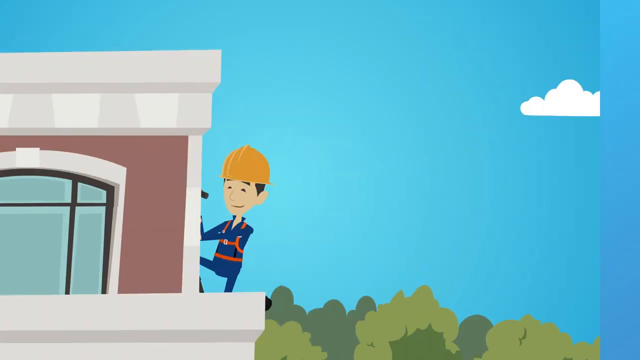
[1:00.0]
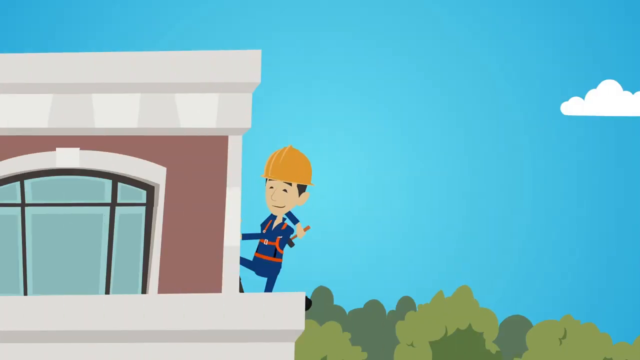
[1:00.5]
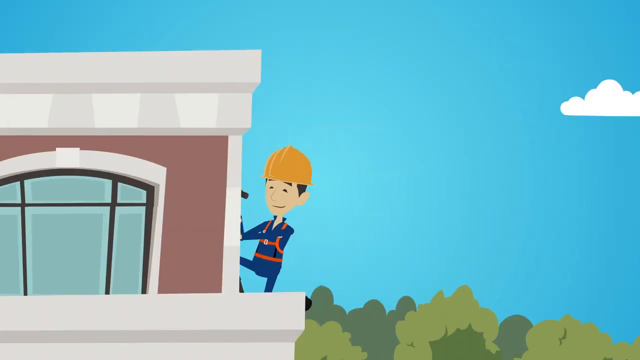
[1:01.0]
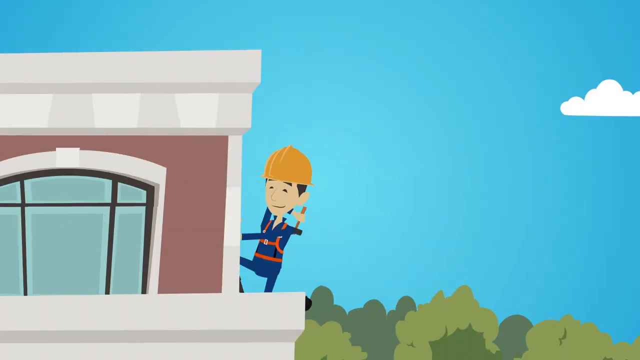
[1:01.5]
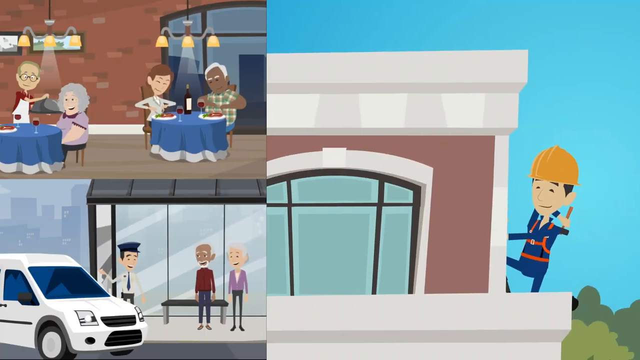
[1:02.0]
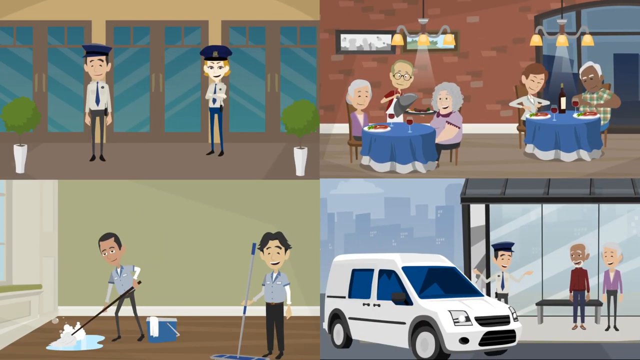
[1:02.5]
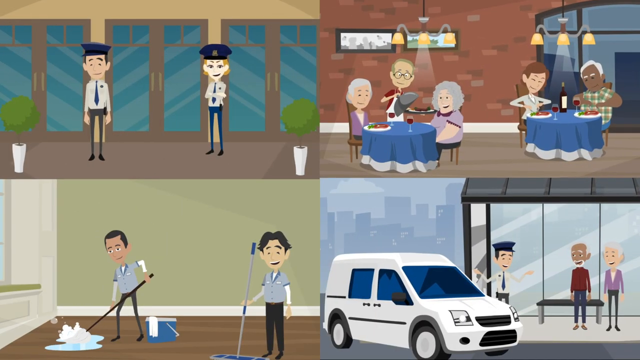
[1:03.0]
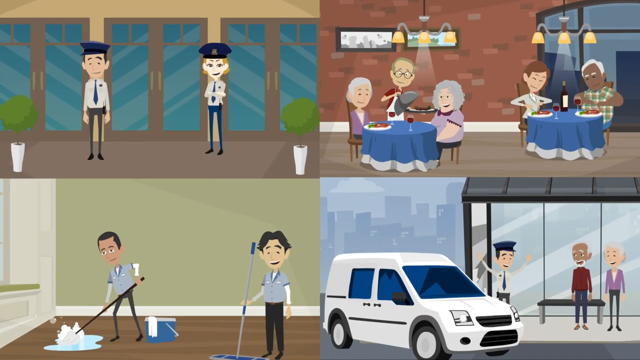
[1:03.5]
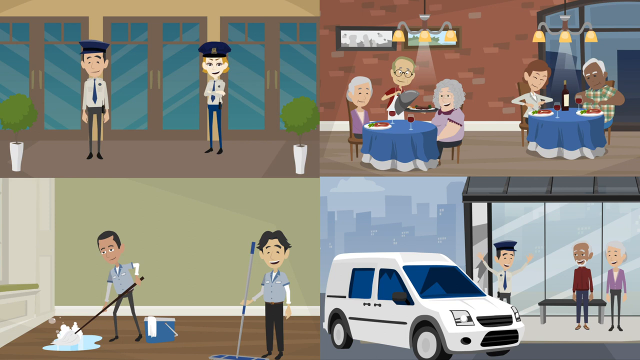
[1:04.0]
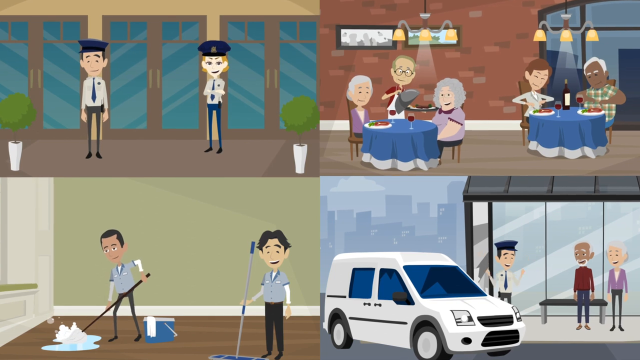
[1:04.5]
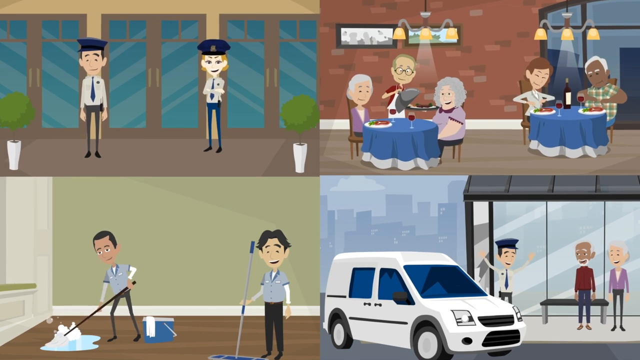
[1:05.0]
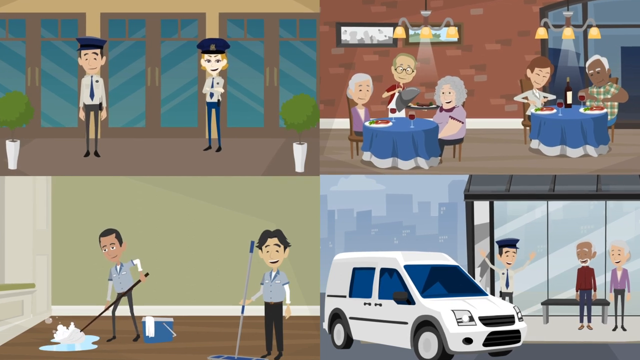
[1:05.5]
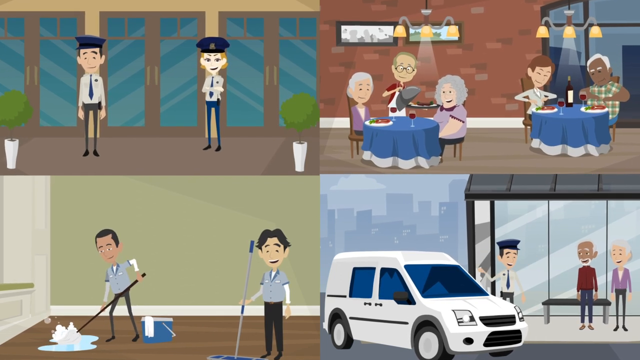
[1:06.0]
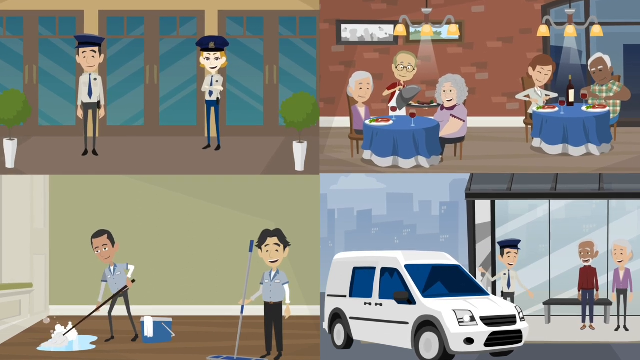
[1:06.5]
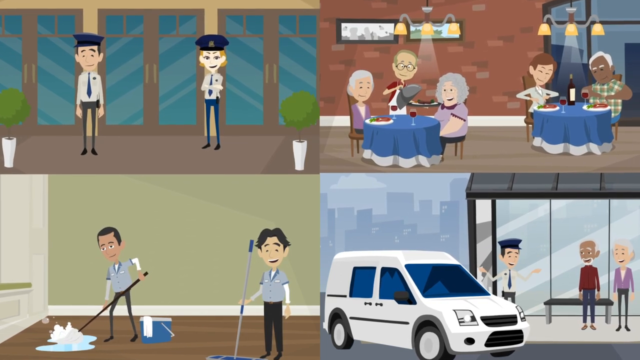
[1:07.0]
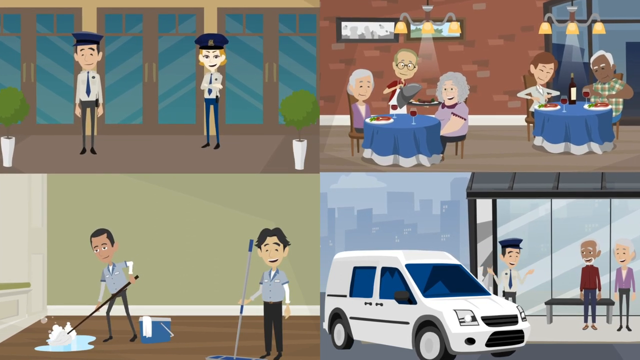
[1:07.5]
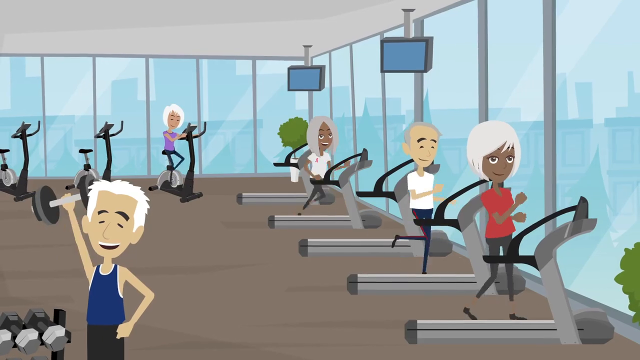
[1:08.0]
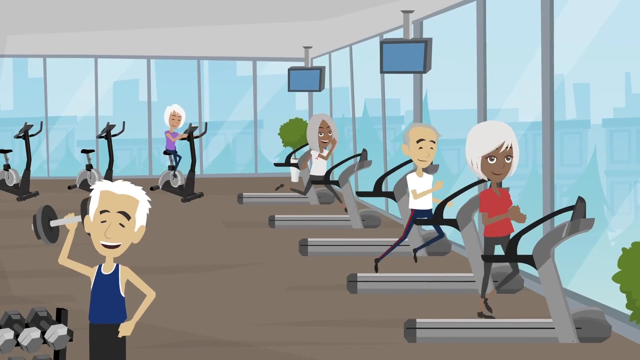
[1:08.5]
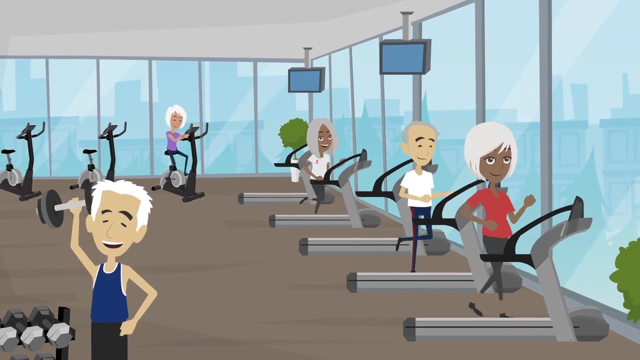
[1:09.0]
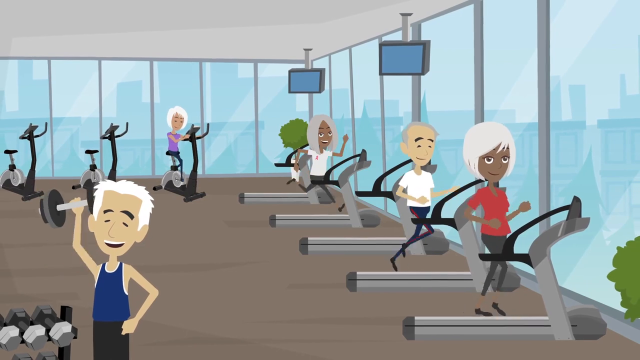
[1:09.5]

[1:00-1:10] A man works on the outside of a building, wearing some kind of red harness over blue overalls and a yellow hard hat, hammering the building's exterior wall. The next scene is split into four. In the top left, two security guards are outside the front of a building. In the top right, two elderly-looking couples are out for dinner at a restaurant, with a waiter presenting food to one of the customers. In the bottom left, two cleaners mop a wooden floor in a building. In the bottom right, a small white van has a security man outside it talking to an elderly couple, apparently perhaps at a bus stop.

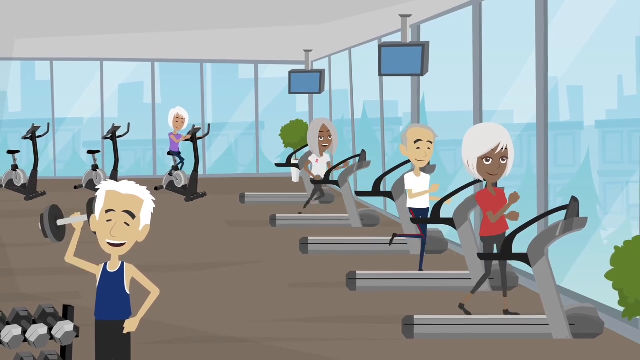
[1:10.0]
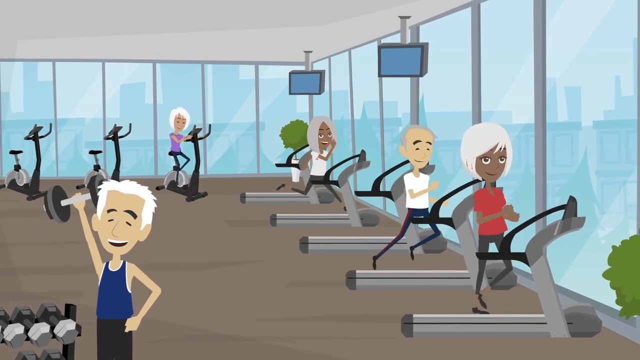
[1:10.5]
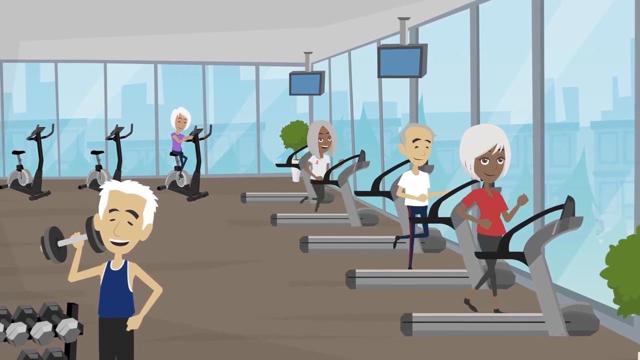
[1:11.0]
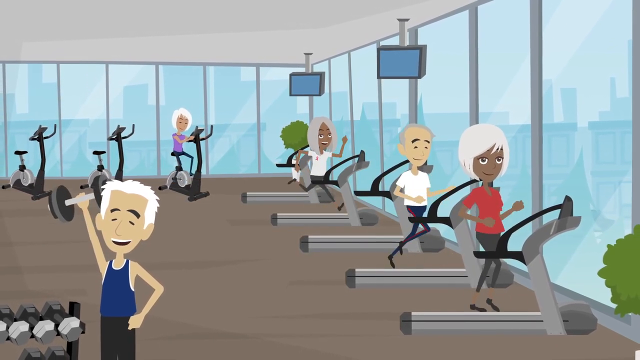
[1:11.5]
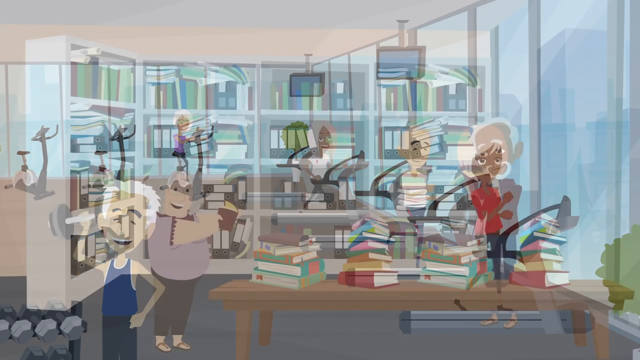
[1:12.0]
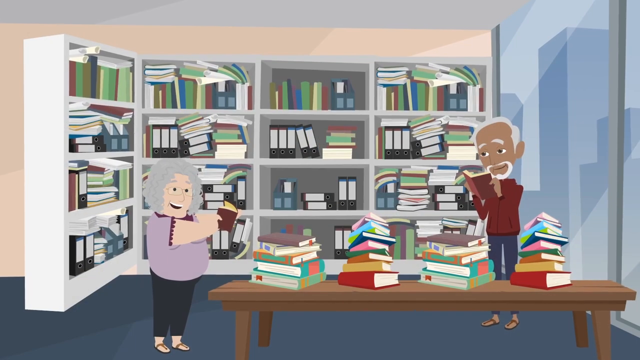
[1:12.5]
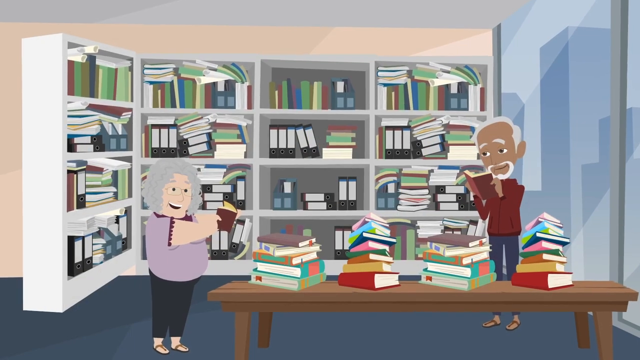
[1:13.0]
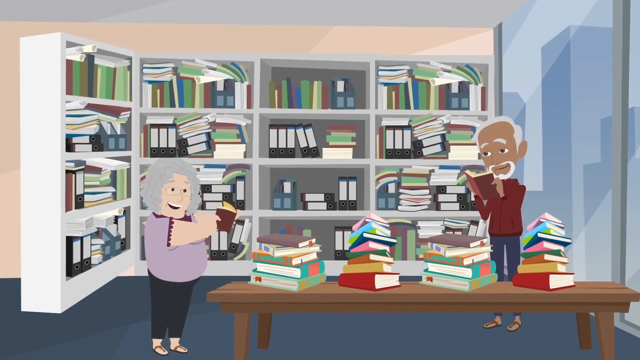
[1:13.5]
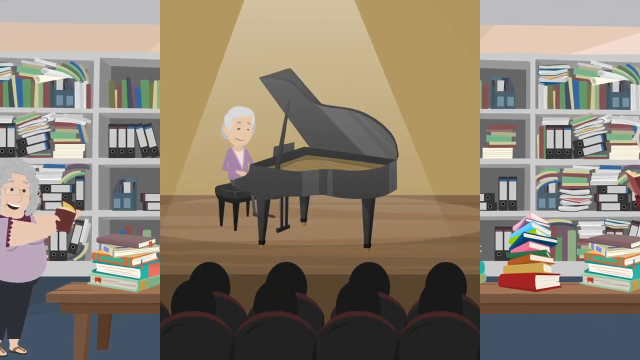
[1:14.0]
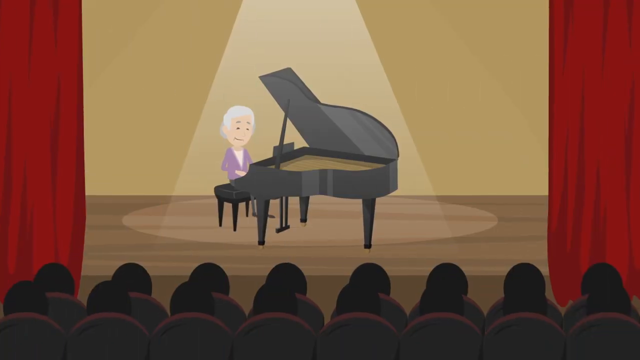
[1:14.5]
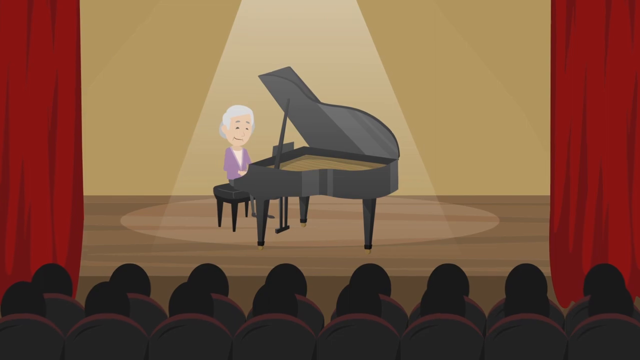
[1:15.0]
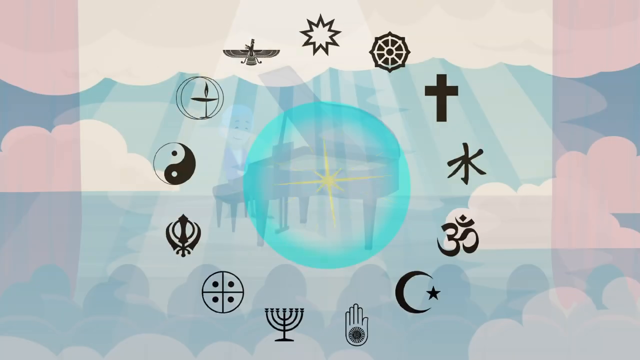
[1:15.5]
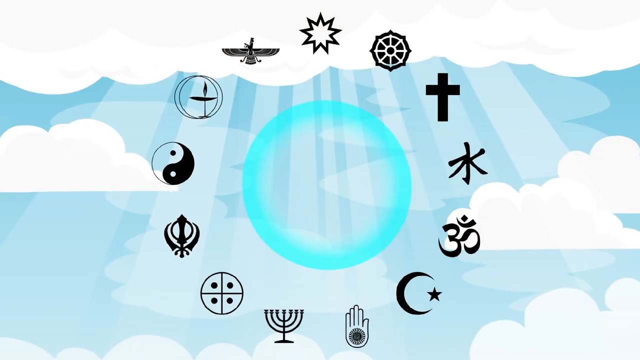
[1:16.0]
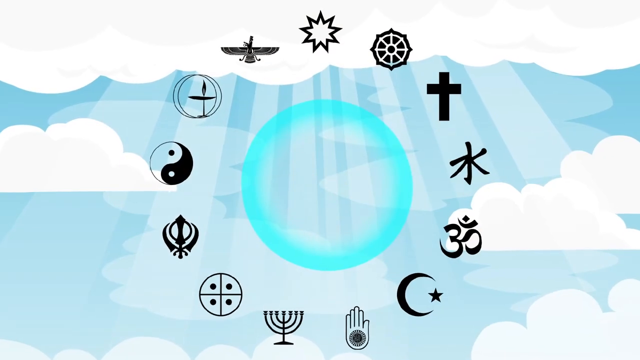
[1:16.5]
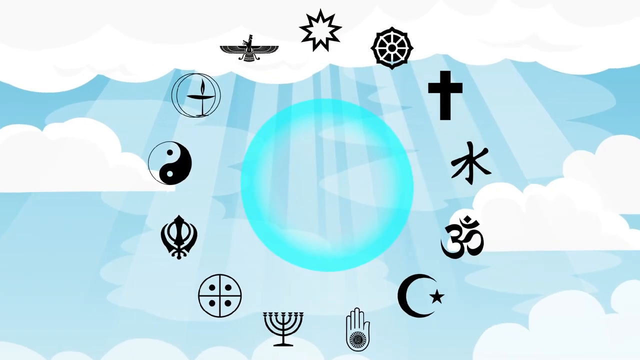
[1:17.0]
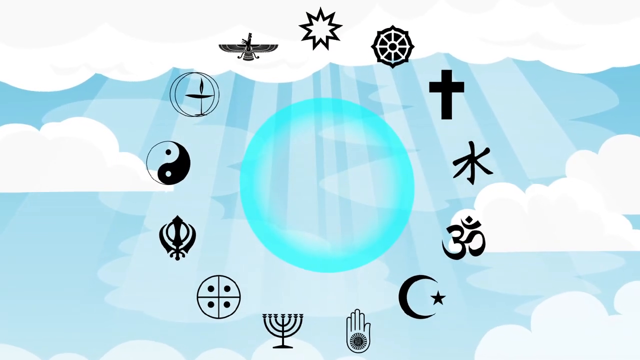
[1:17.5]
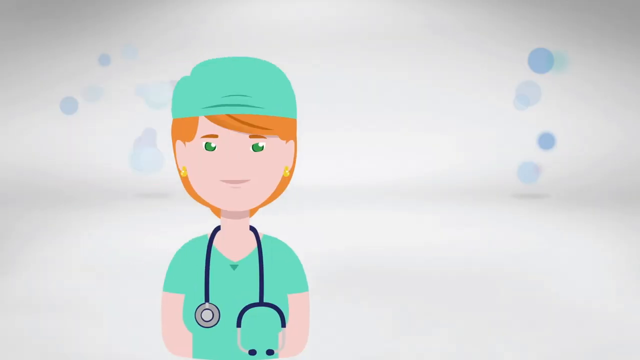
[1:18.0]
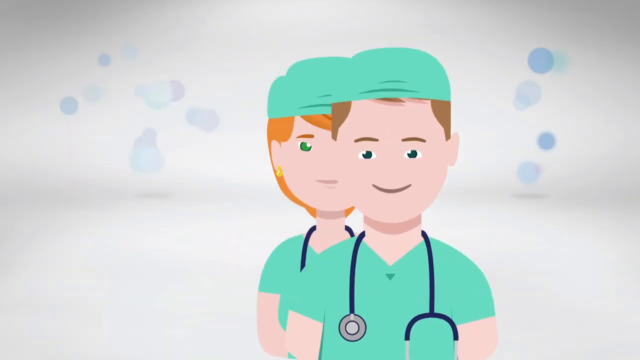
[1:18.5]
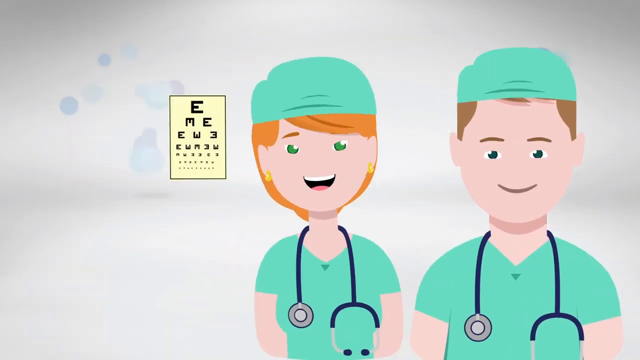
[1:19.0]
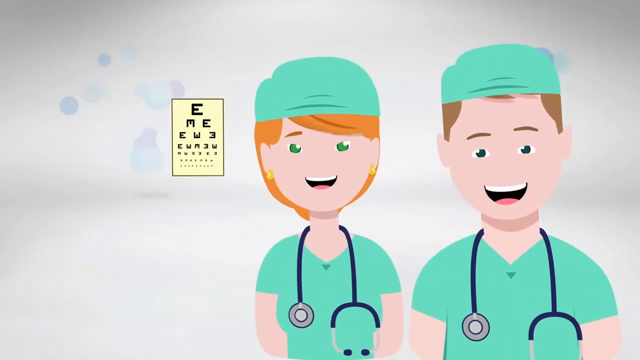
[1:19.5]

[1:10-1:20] A gym scene shows lots of people exercising on bikes and treadmills, with a man in the foreground lifting a dumbbell over his head. Next, an elderly couple read and look through lots of books, with books piled up on the table and bookshelves behind them. A very short scene shows an elderly person playing piano in front of an audience on a stage, followed by a diagram of lots of symbols of different religions. Towards the end, there is an eye test scenario with two professionals.